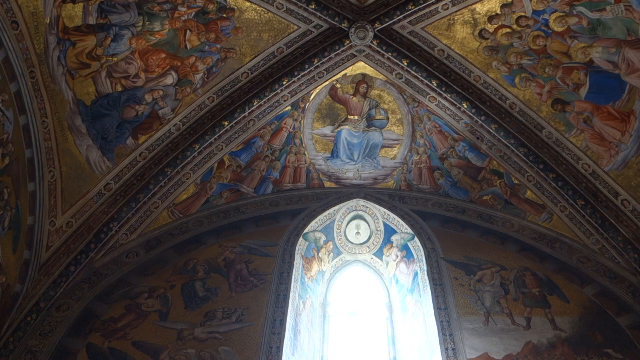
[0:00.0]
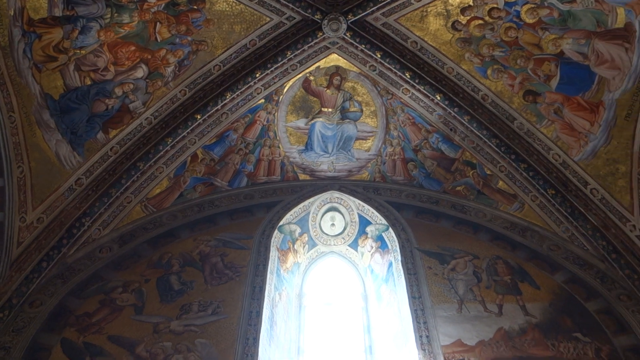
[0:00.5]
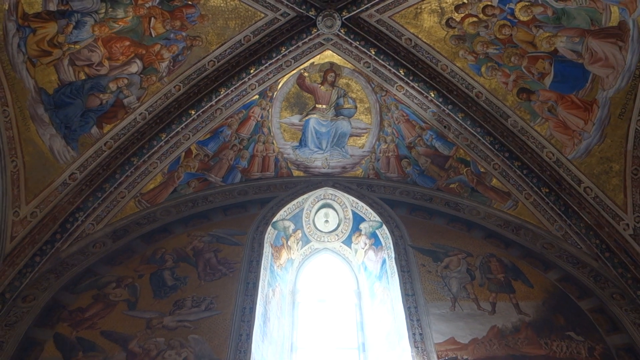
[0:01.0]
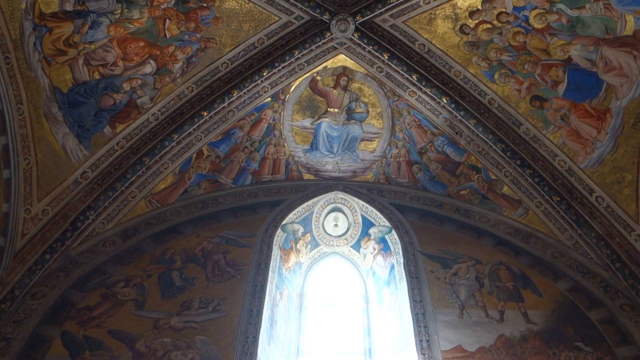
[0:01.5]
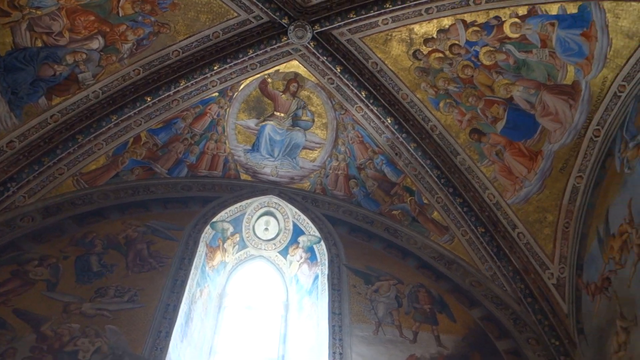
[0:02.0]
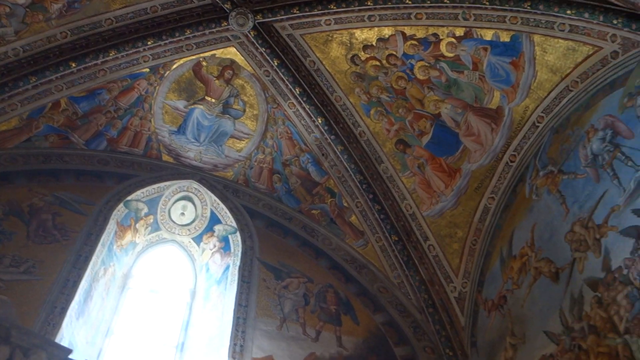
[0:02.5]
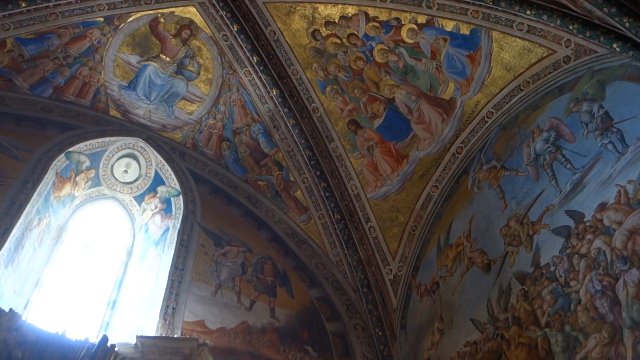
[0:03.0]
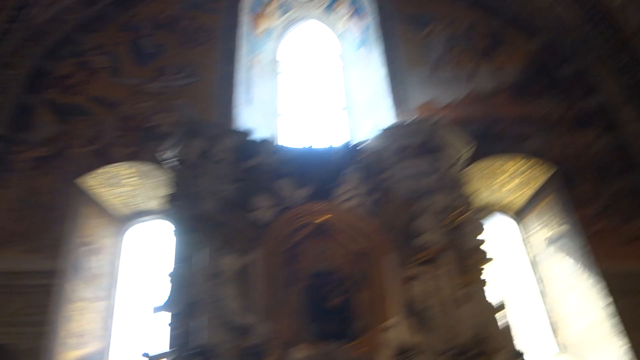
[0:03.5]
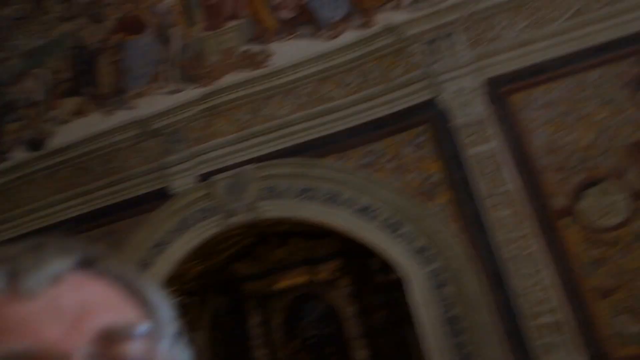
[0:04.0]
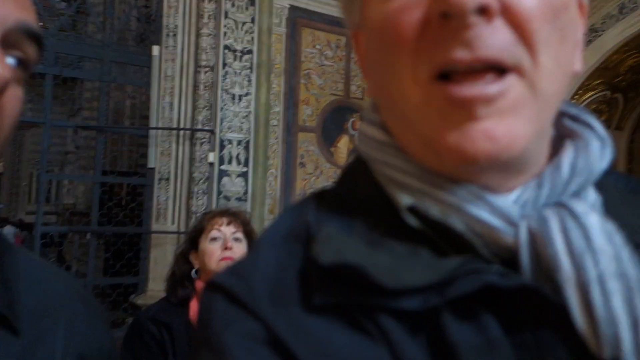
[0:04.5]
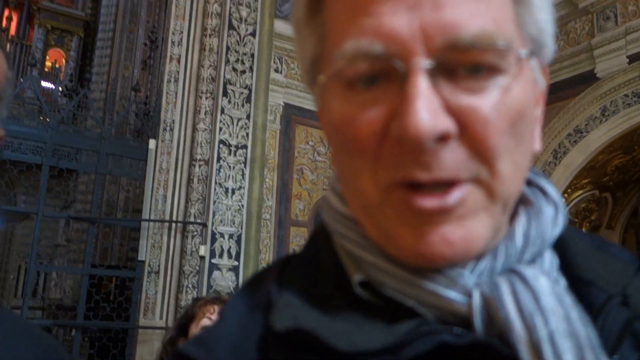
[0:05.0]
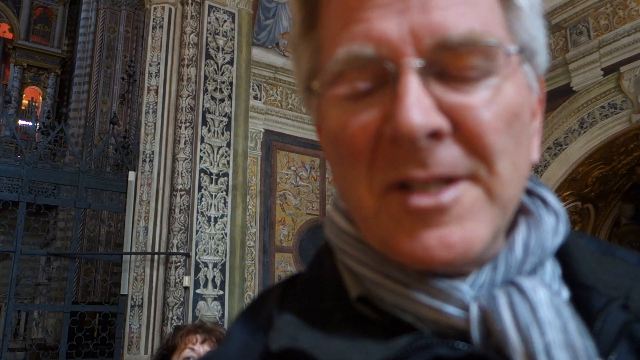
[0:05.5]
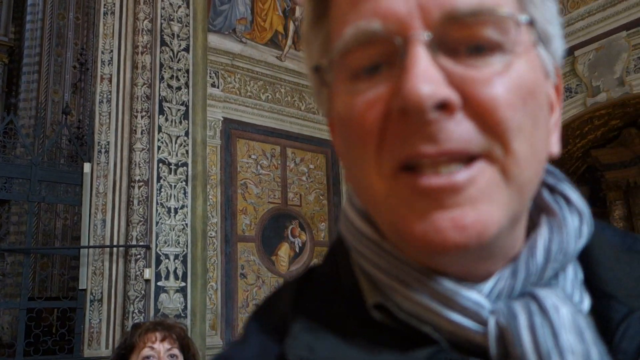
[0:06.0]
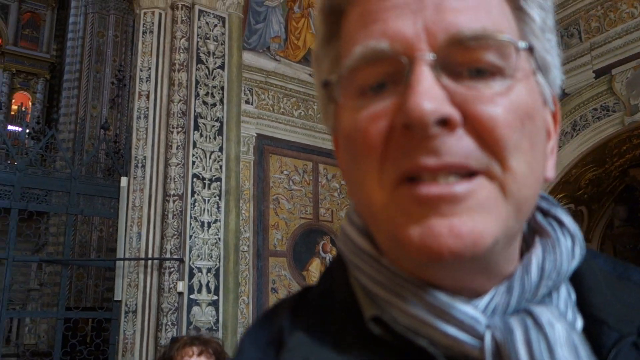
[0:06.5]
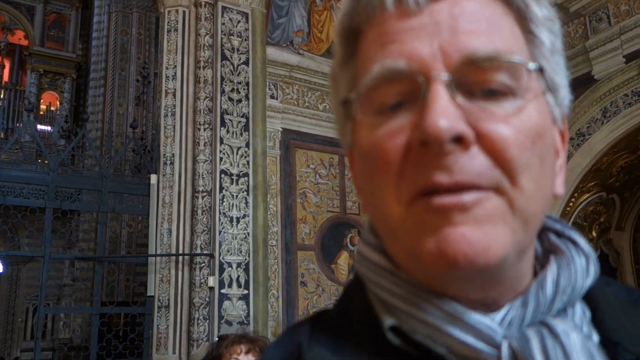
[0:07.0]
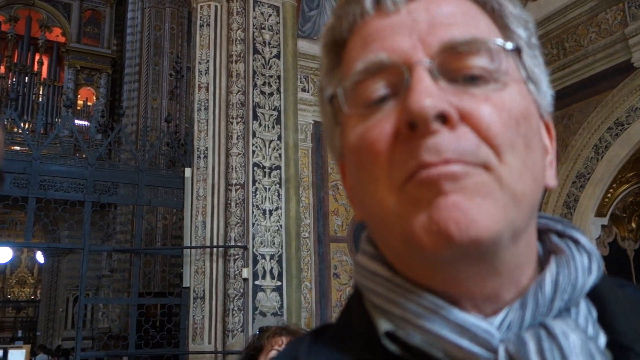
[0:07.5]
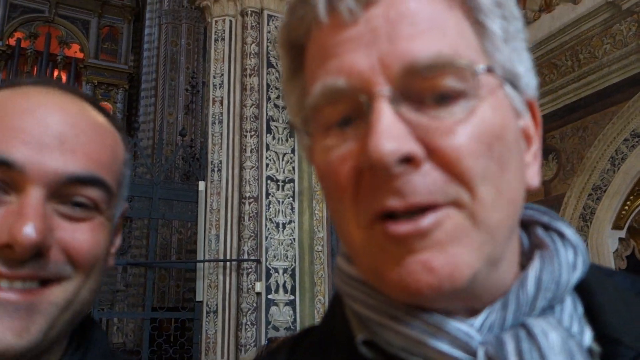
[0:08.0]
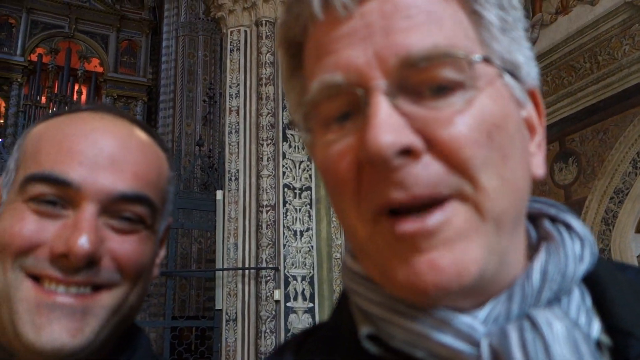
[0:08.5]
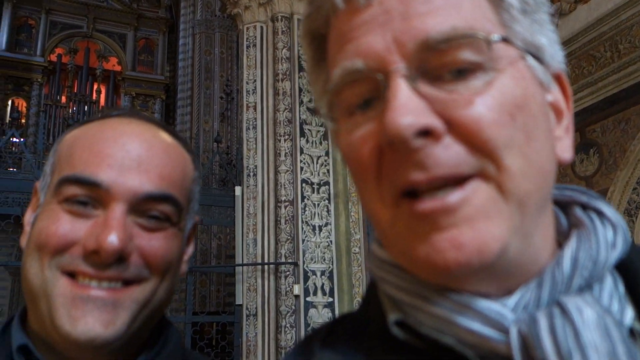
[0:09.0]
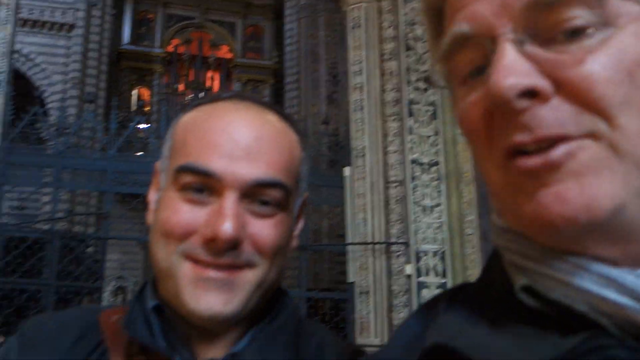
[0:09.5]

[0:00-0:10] This personal footage begins by showing the ceiling of a cathedral, which has many religious images. The camera pans around the cathedral ceiling. Two white males are in view. The man holding the camera is the taller of the two; he has gray hair and wears glasses and a neck scarf. The shorter man is balding with gray hair and has very dark, thick eyebrows. Both men are happy to be at the cathedral. The cathedral has stained glass windows.